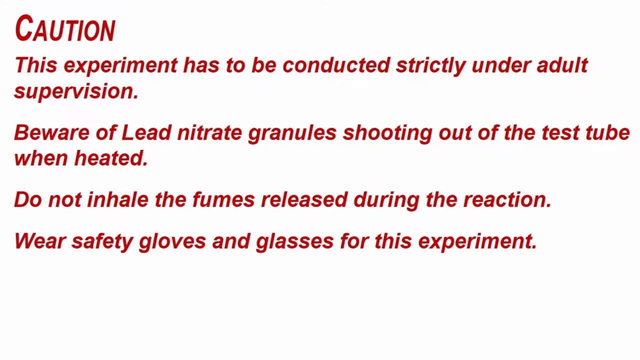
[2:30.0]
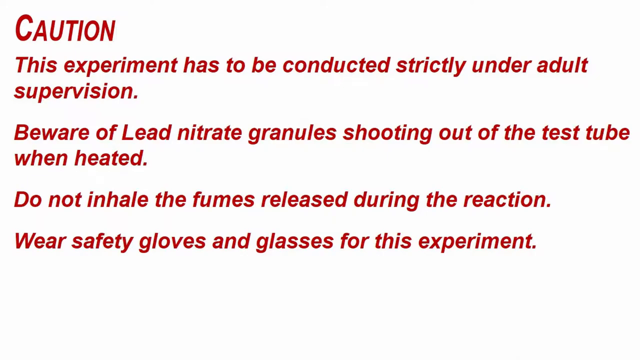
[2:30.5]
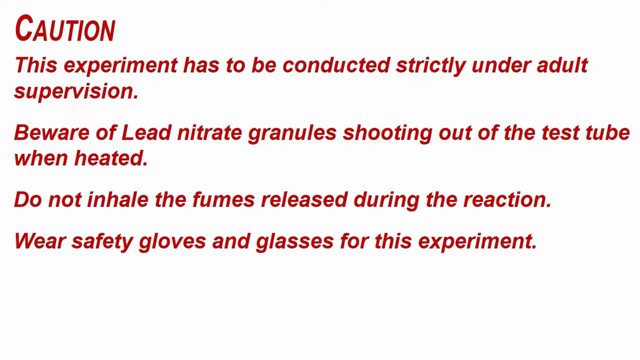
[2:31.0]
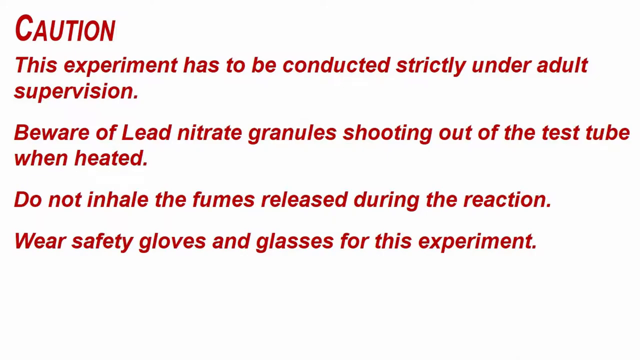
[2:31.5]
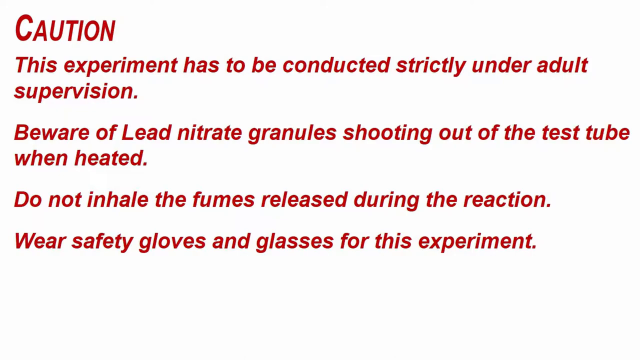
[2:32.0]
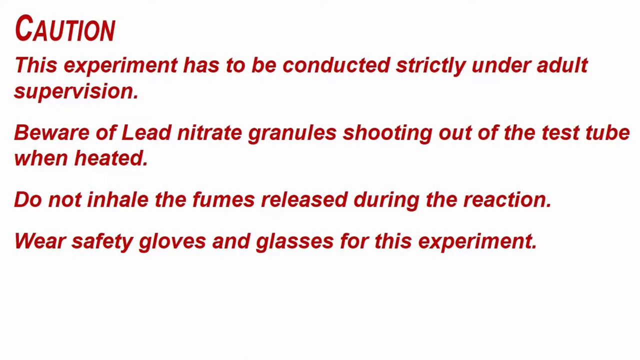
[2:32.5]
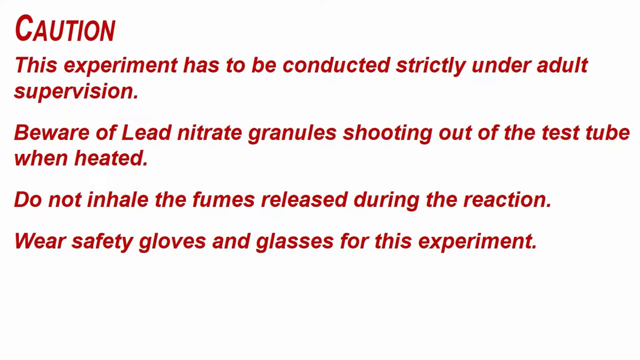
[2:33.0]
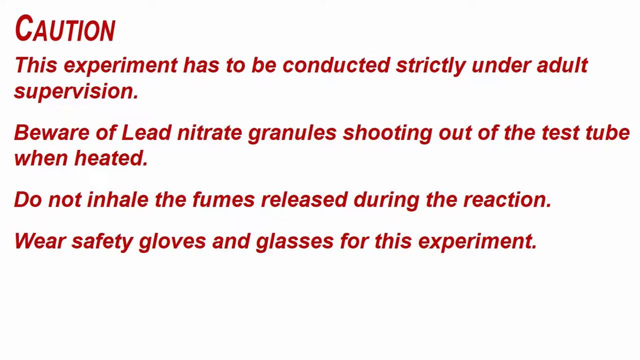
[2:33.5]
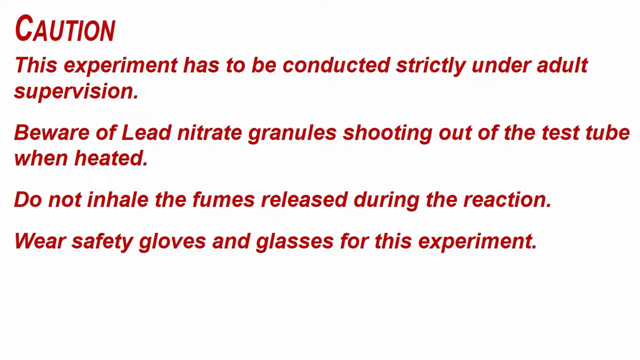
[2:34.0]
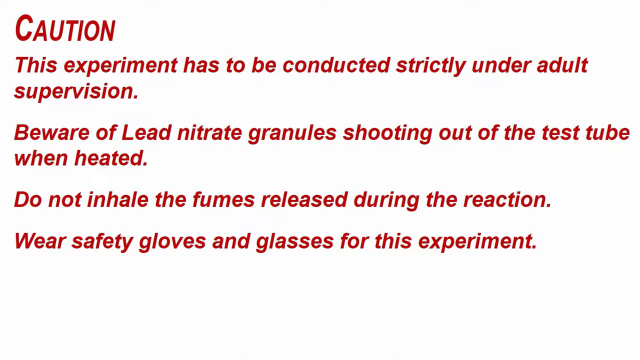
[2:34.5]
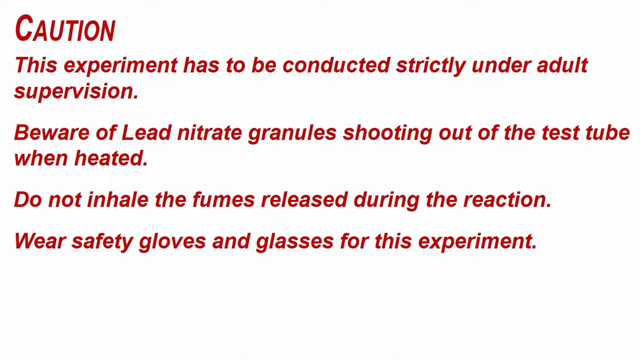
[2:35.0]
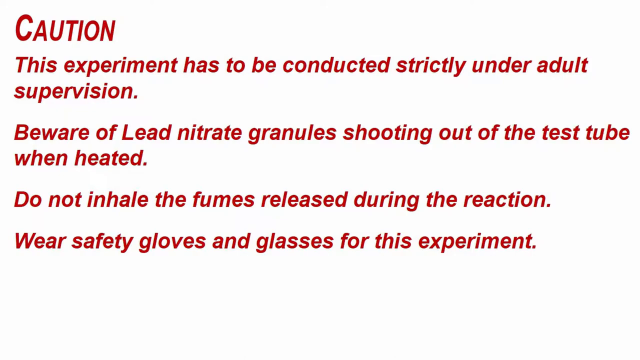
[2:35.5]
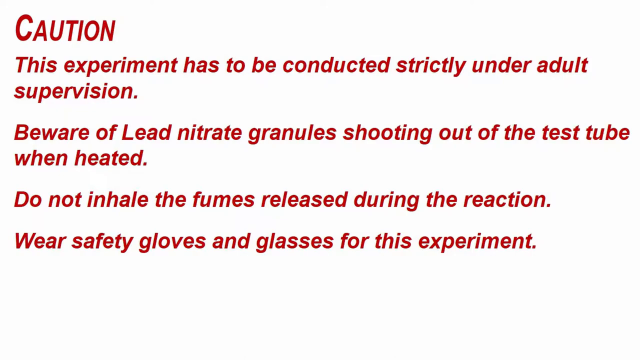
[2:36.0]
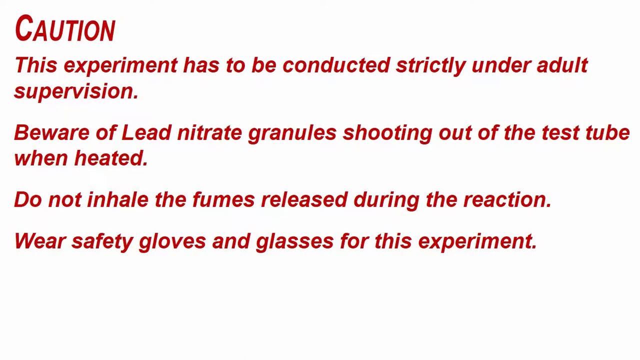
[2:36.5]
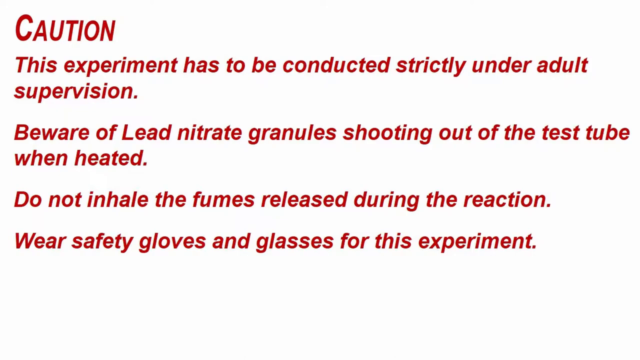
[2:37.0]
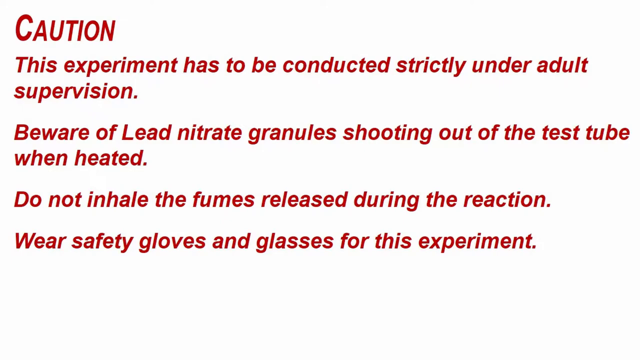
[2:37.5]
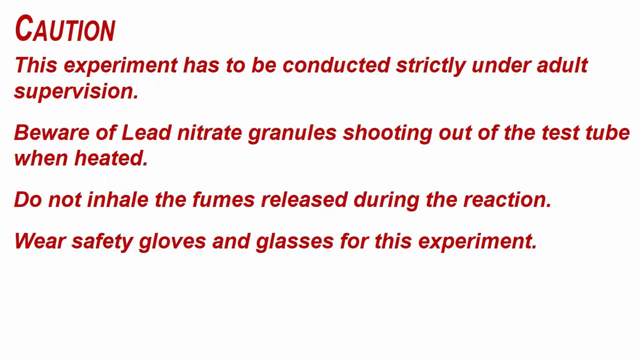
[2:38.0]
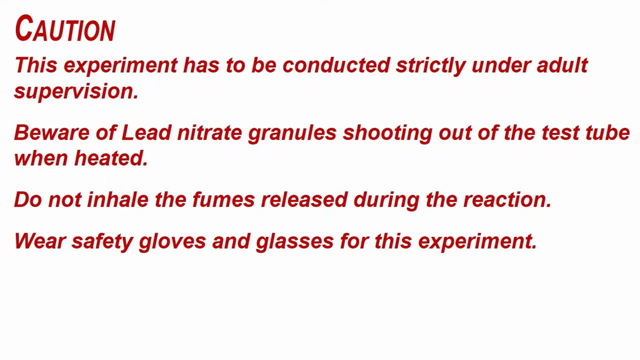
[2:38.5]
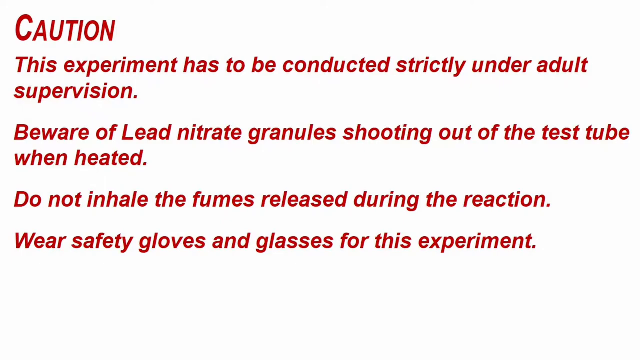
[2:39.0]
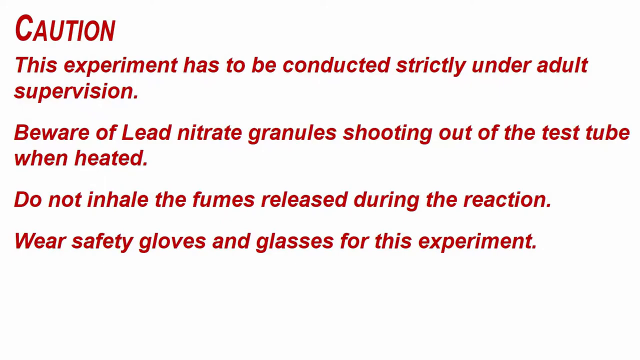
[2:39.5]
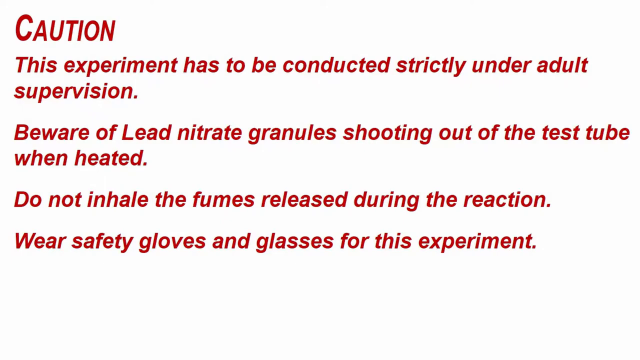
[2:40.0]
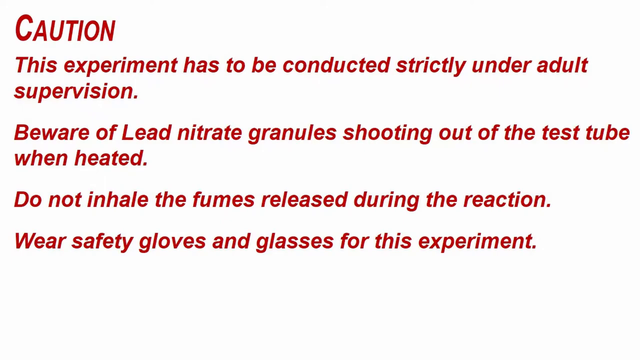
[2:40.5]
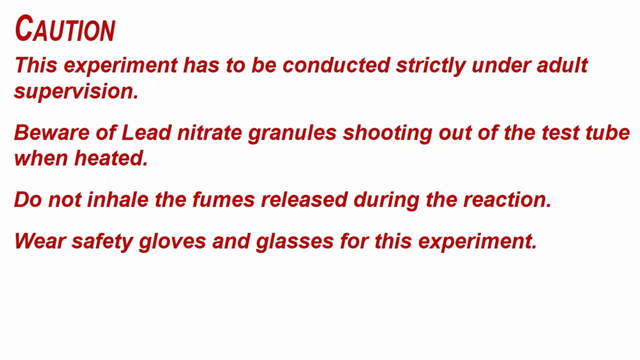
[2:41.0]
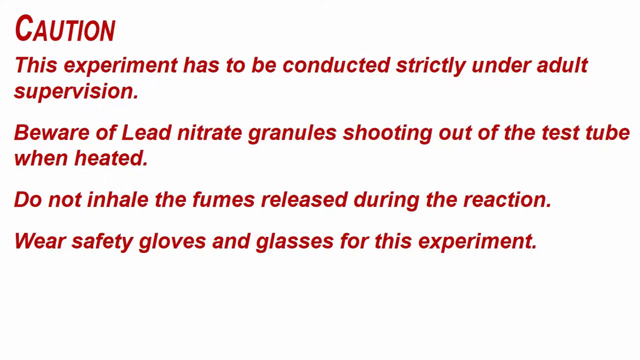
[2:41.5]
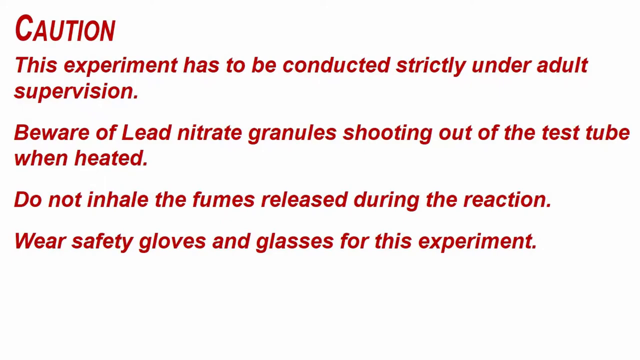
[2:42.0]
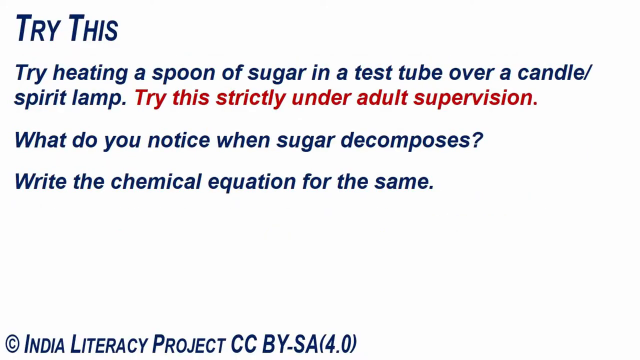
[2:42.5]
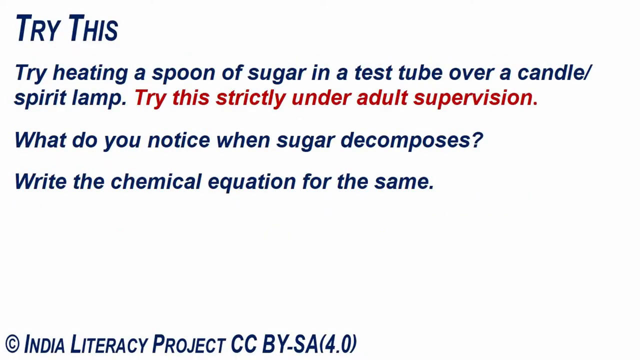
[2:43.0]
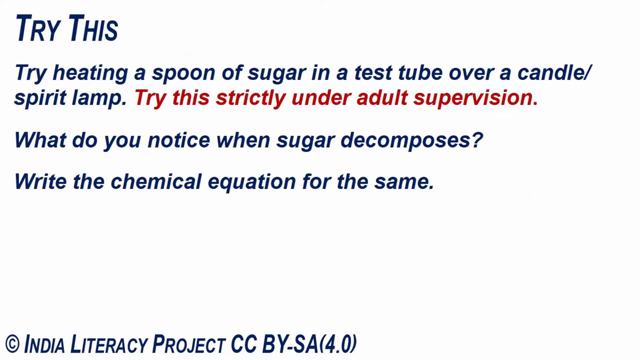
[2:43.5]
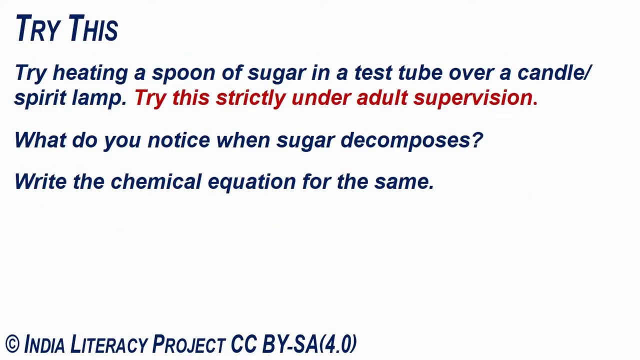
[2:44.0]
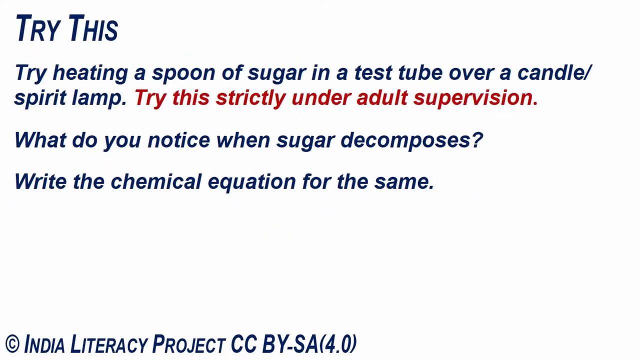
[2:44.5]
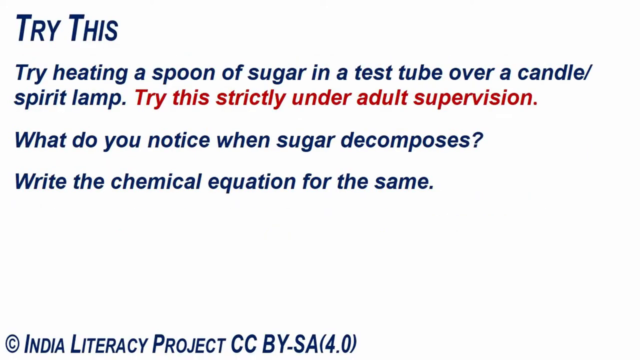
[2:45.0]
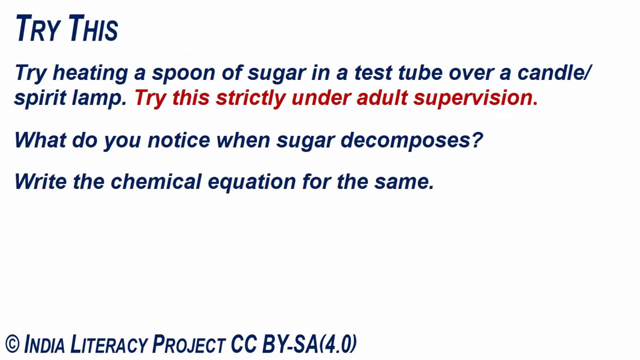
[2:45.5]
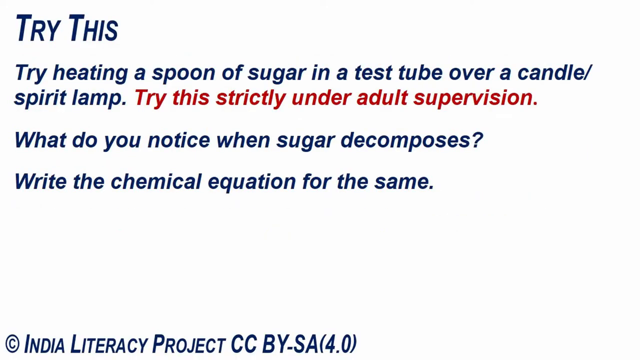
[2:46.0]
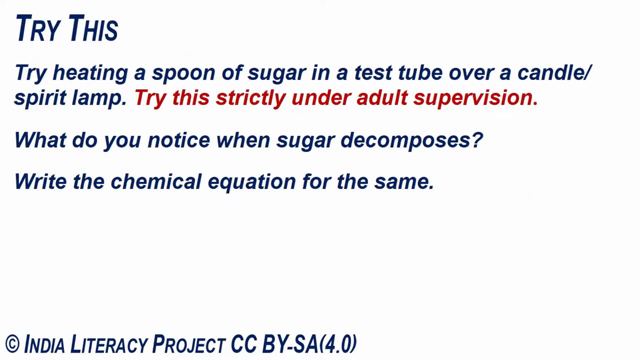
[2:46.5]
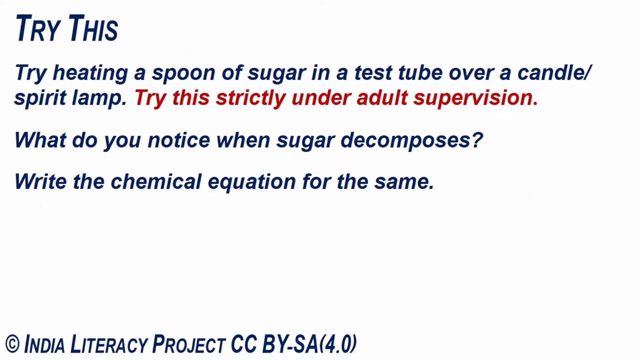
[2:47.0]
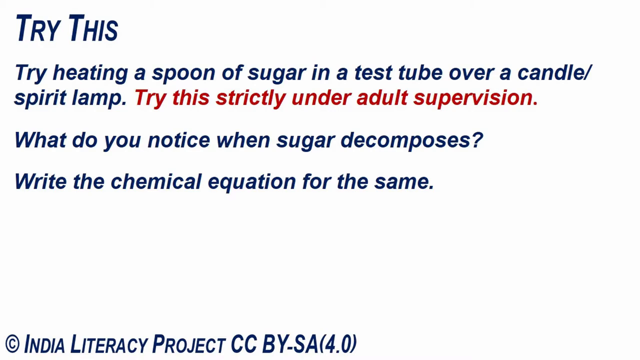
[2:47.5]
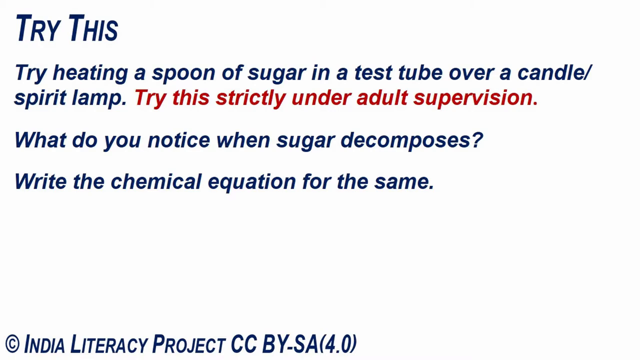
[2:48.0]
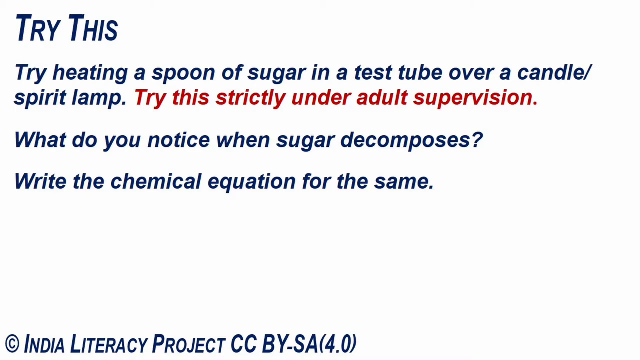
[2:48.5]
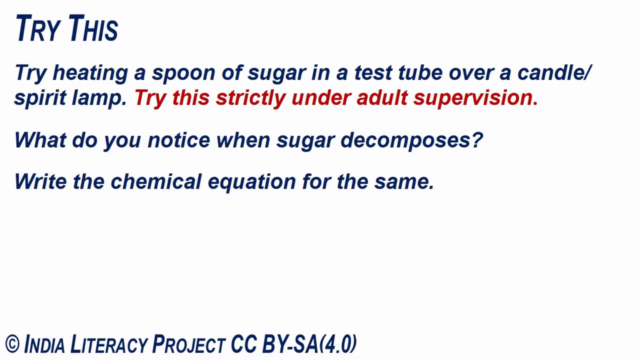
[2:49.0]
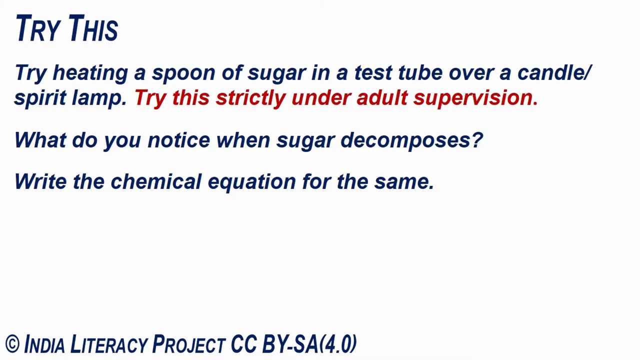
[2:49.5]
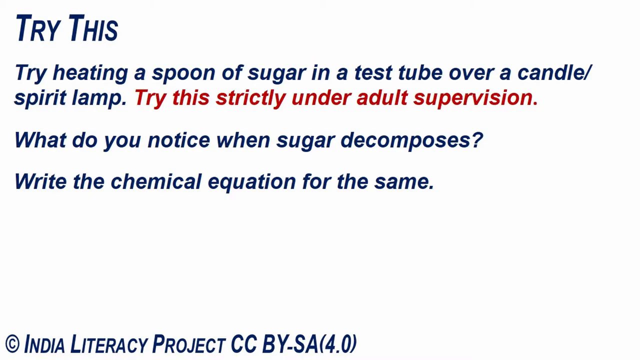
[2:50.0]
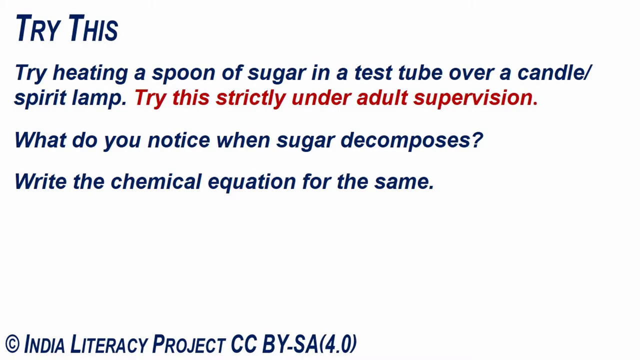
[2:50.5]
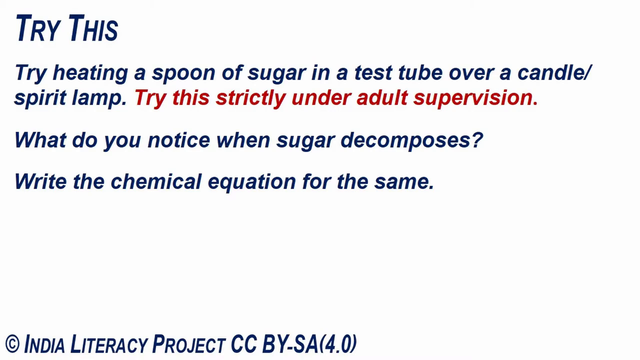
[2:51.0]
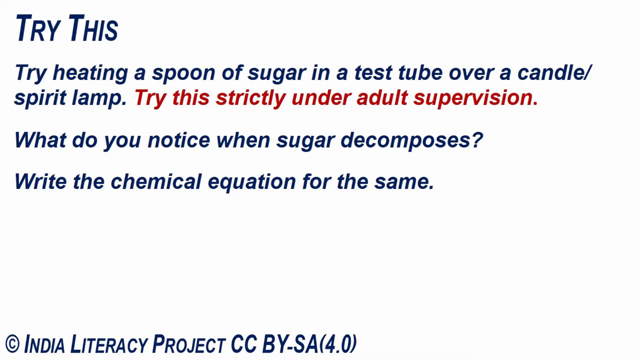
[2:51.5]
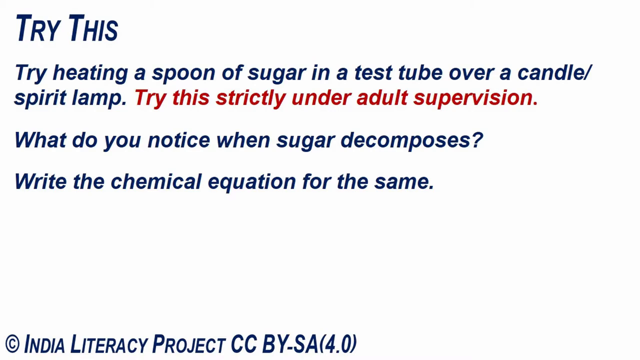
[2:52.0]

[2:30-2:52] Red text on a white background takes up most of the screen and reads: "Caution. This experiment has to be conducted strictly under adult supervision. Beware of lead nitrate granules shooting out of the test tube when heated. Do not inhale the fumes released during the reaction. Wear safety gloves and glasses for this experiment." The text then changes to mostly blue text reading "Try this, try heating a spoon of sugar in a test tube over a candle spirit lamp." After that, red text reads "Try this strictly under adult supervision," and below it blue text reads "What do you notice when sugar decomposes?" This stays on screen for several more seconds before the video ends.